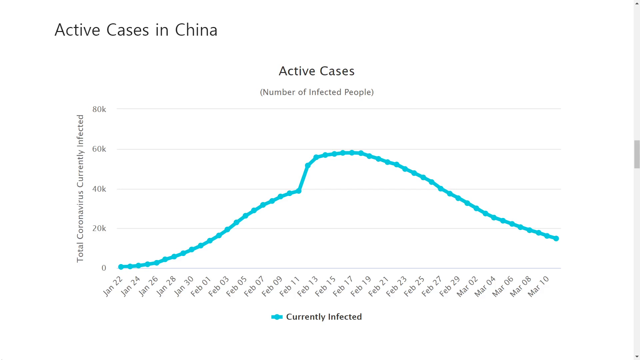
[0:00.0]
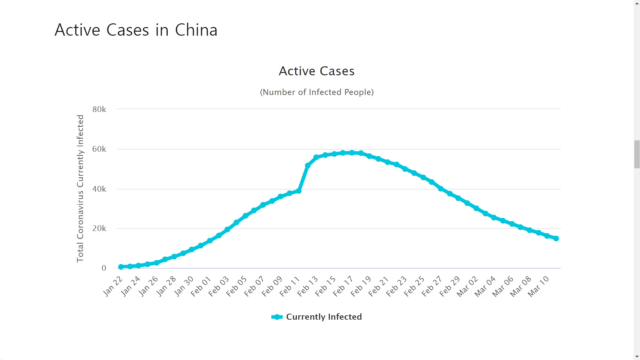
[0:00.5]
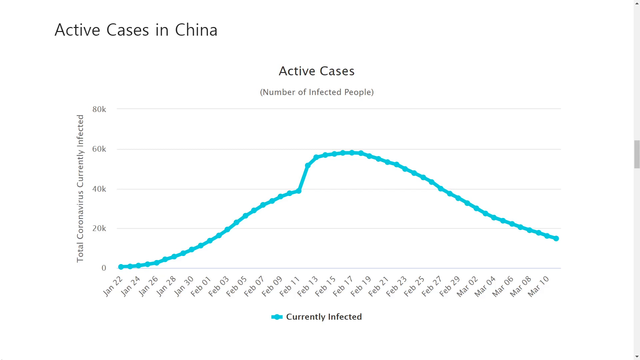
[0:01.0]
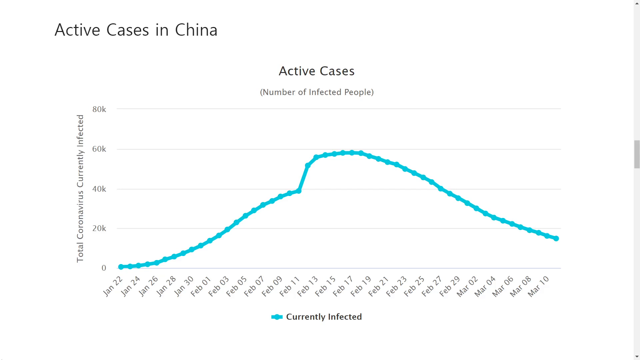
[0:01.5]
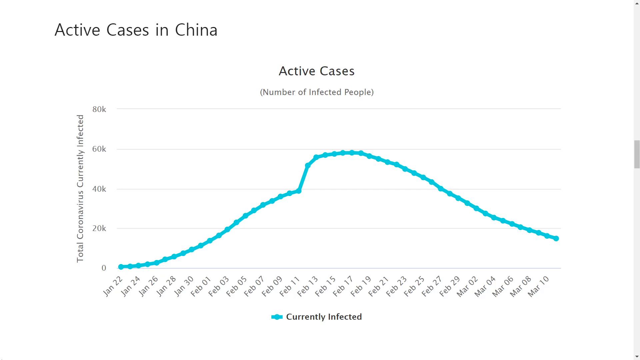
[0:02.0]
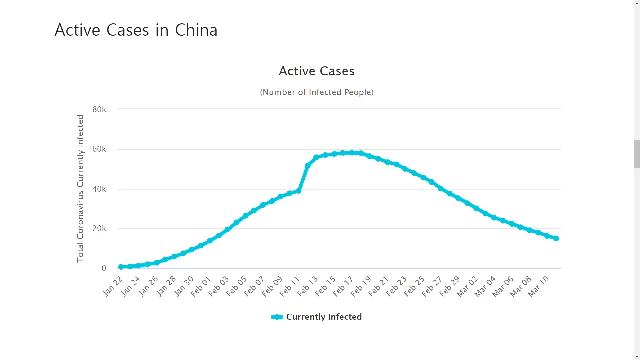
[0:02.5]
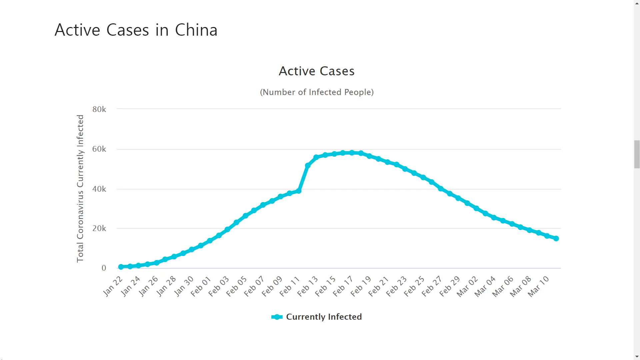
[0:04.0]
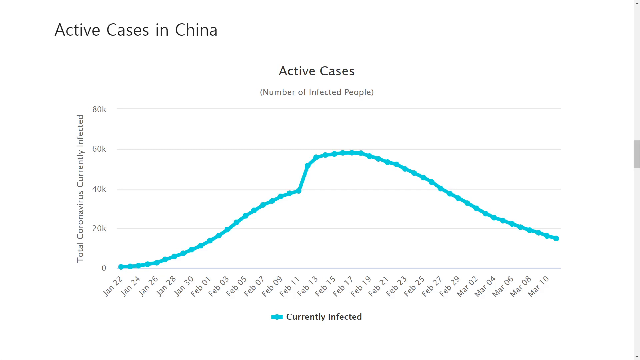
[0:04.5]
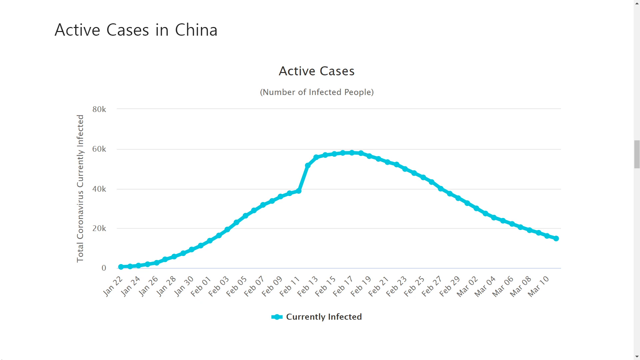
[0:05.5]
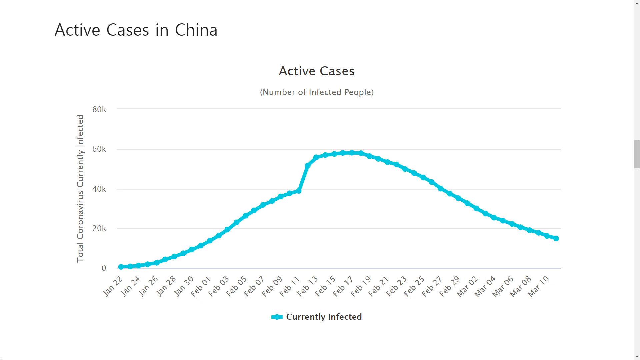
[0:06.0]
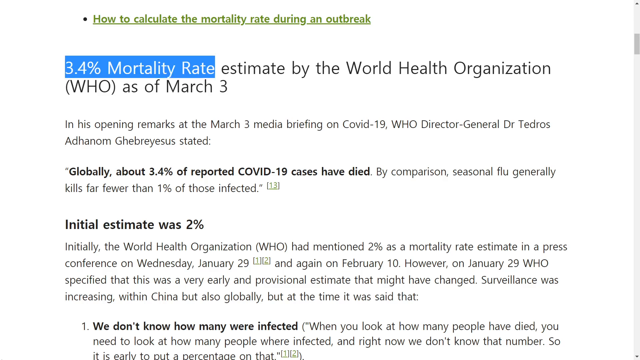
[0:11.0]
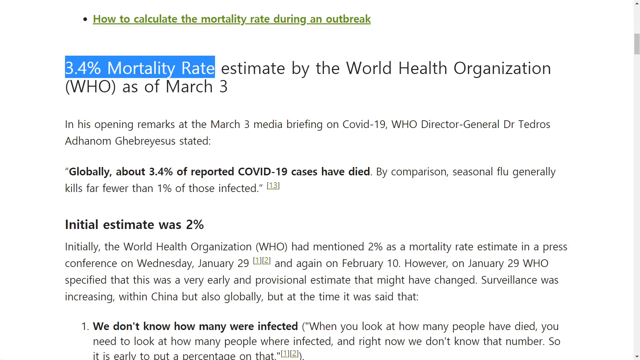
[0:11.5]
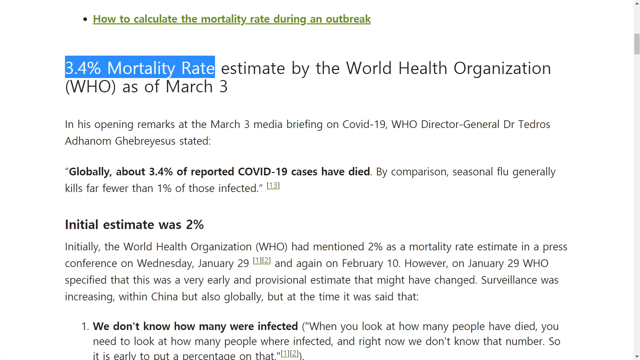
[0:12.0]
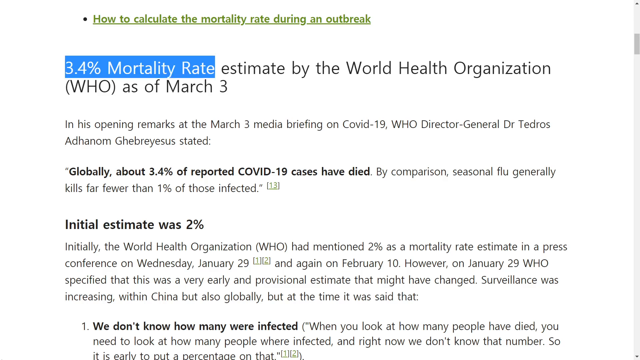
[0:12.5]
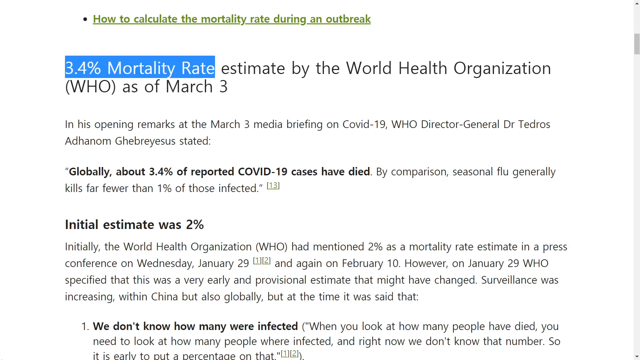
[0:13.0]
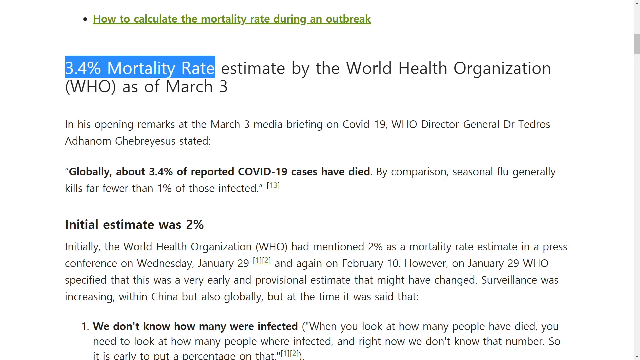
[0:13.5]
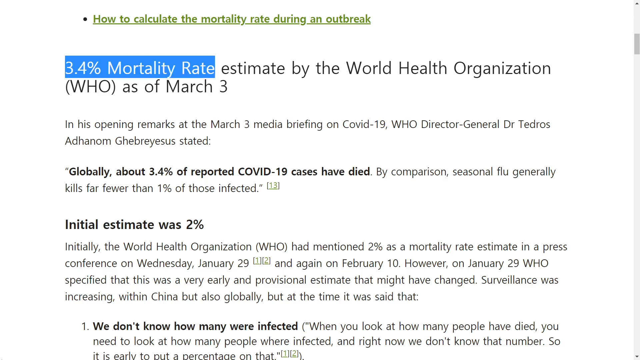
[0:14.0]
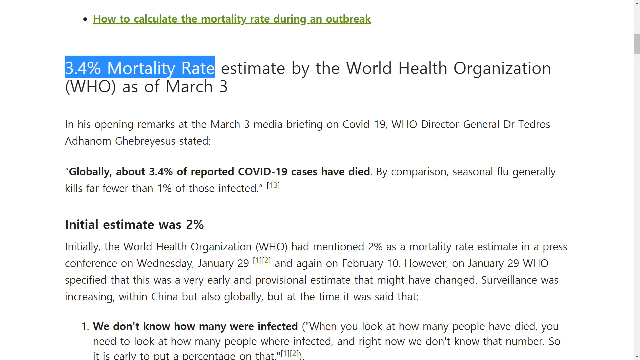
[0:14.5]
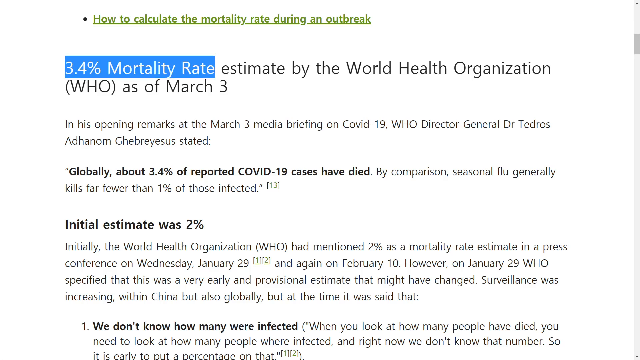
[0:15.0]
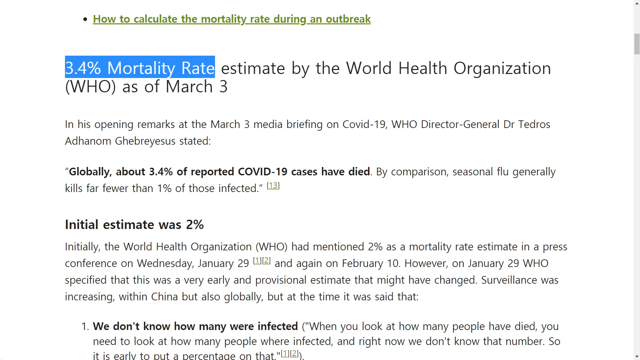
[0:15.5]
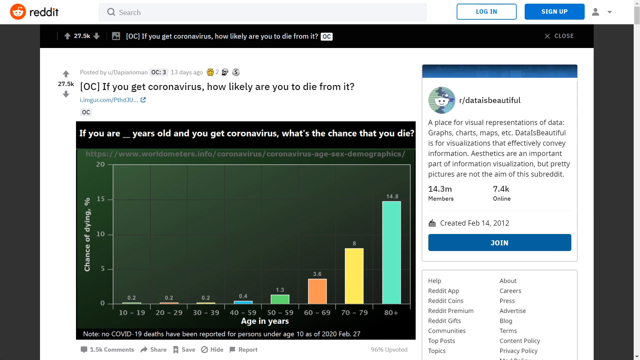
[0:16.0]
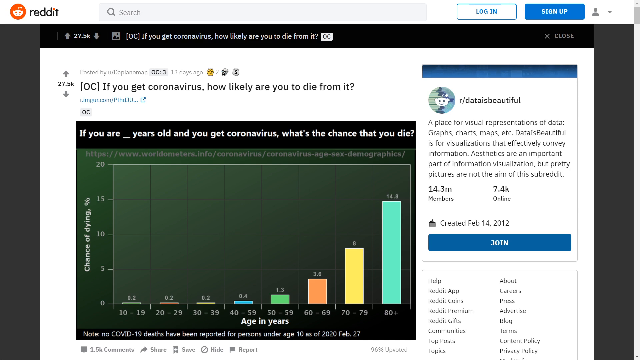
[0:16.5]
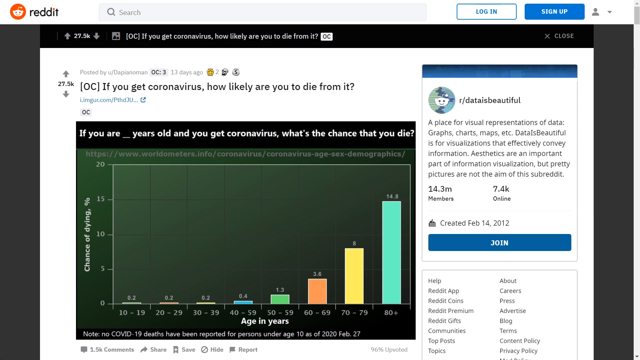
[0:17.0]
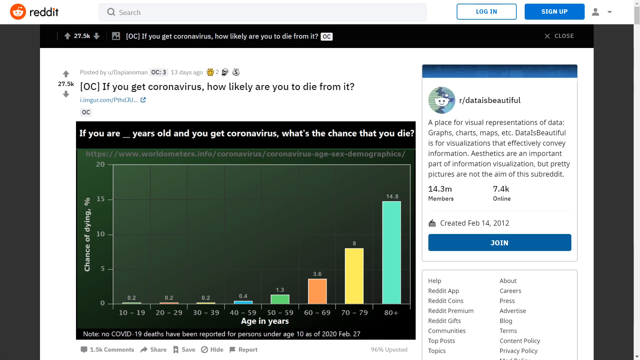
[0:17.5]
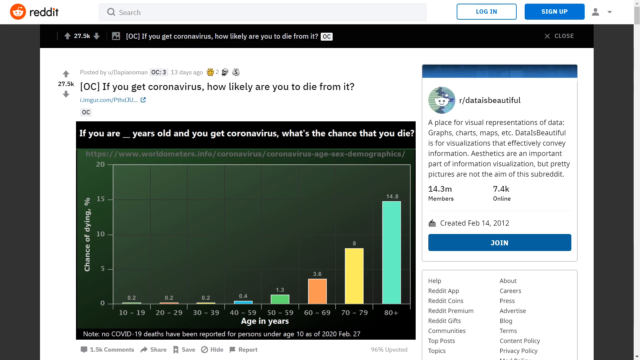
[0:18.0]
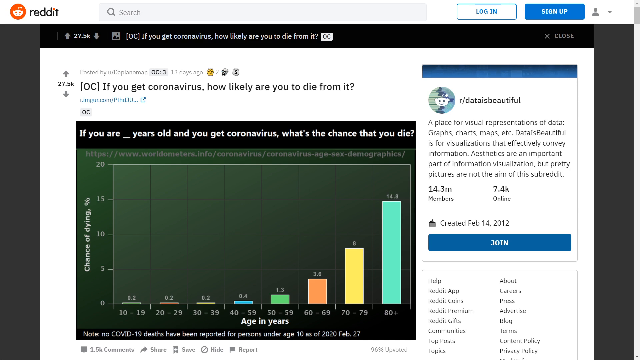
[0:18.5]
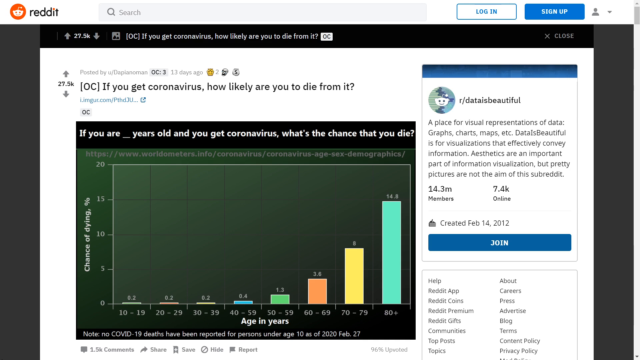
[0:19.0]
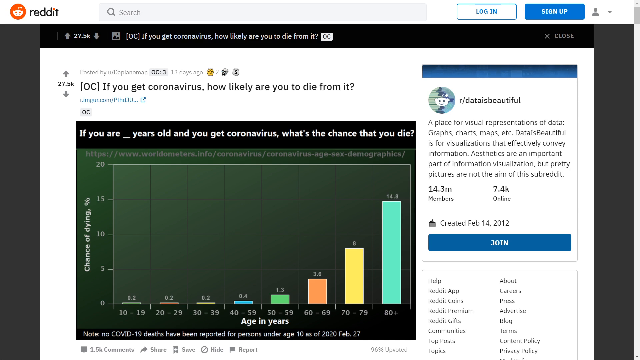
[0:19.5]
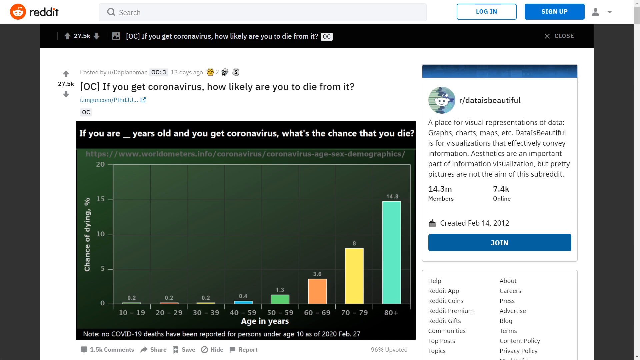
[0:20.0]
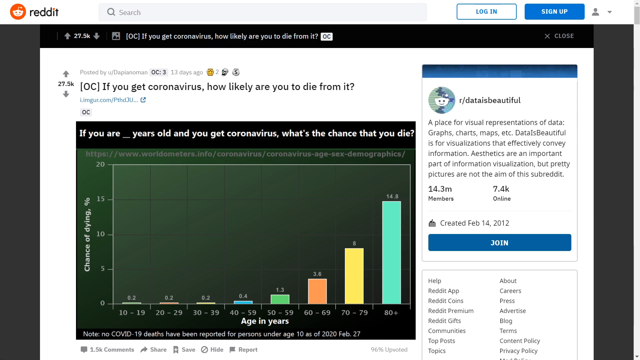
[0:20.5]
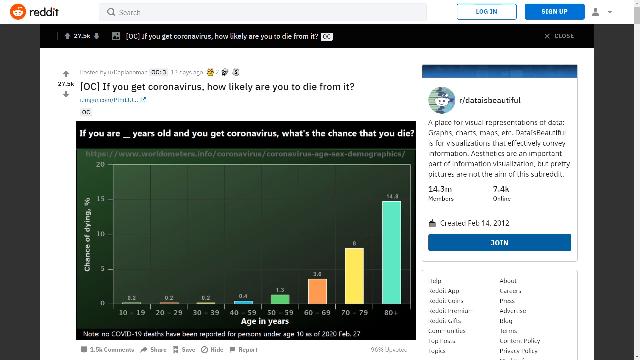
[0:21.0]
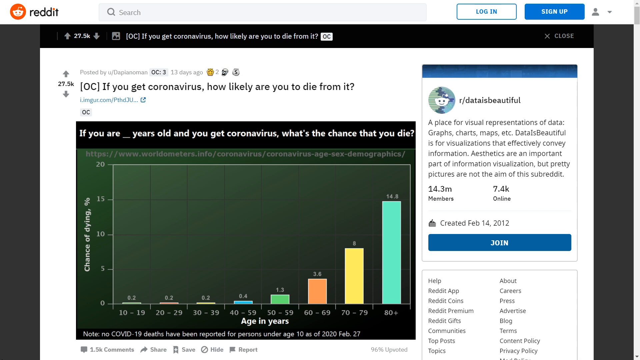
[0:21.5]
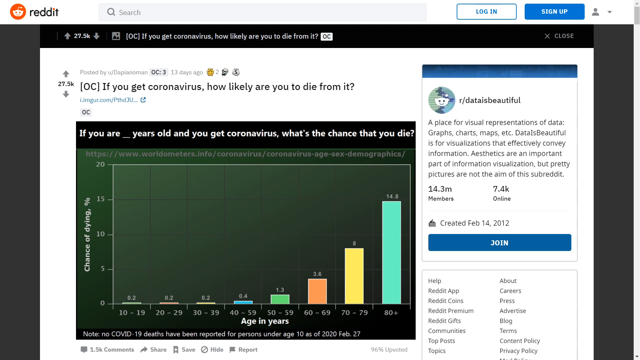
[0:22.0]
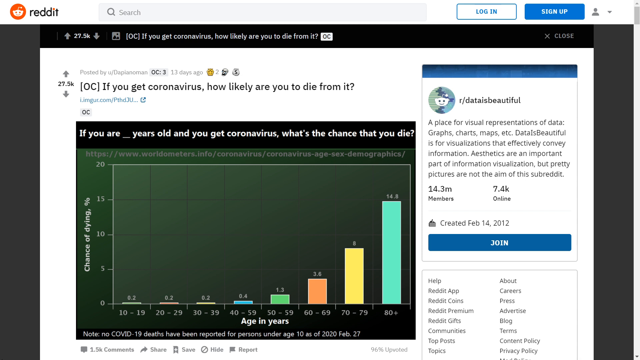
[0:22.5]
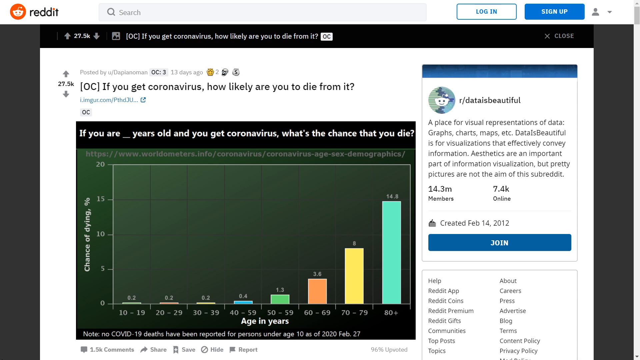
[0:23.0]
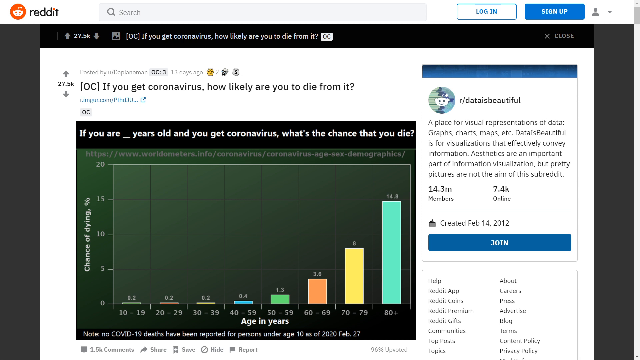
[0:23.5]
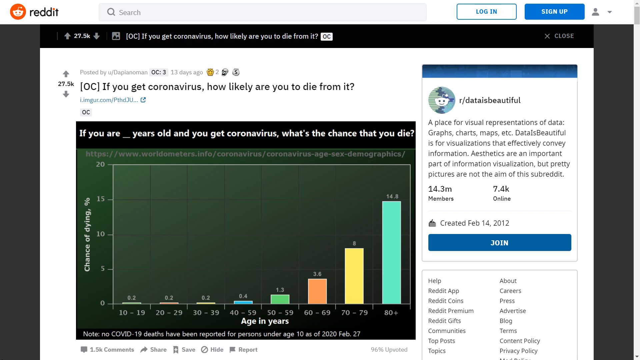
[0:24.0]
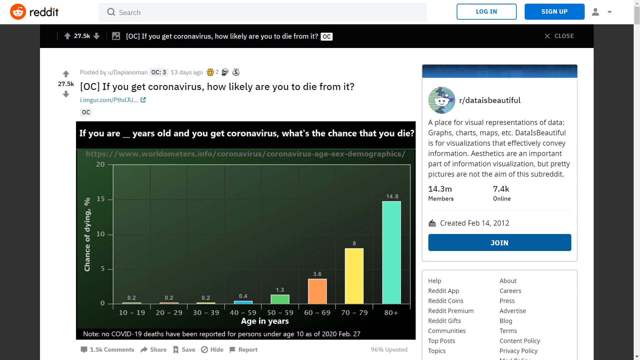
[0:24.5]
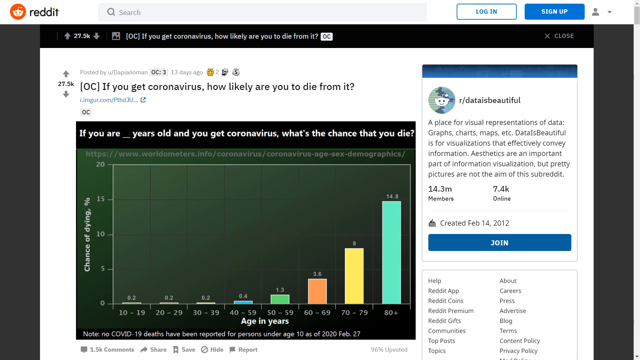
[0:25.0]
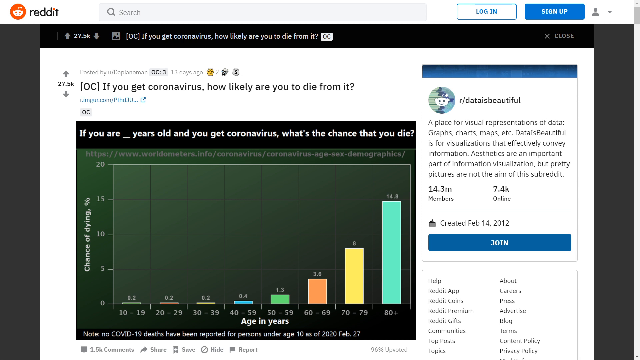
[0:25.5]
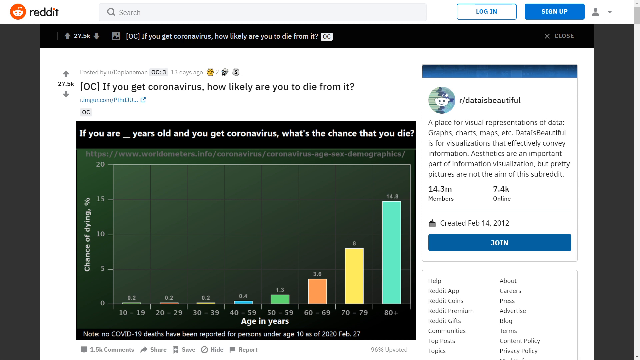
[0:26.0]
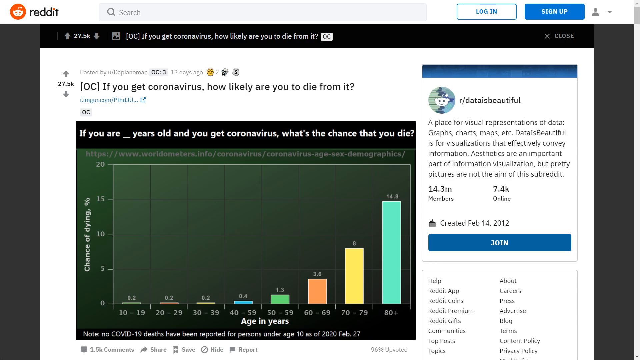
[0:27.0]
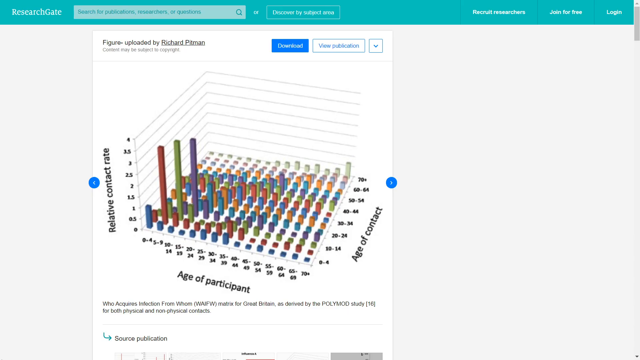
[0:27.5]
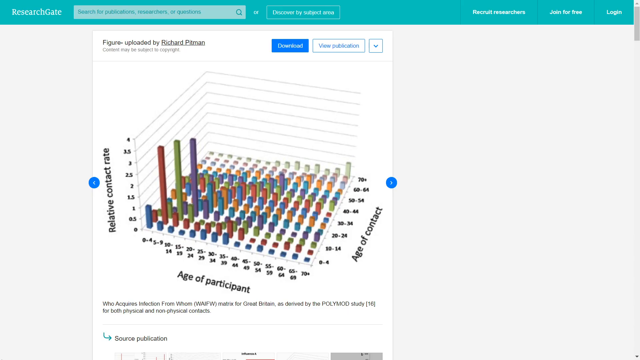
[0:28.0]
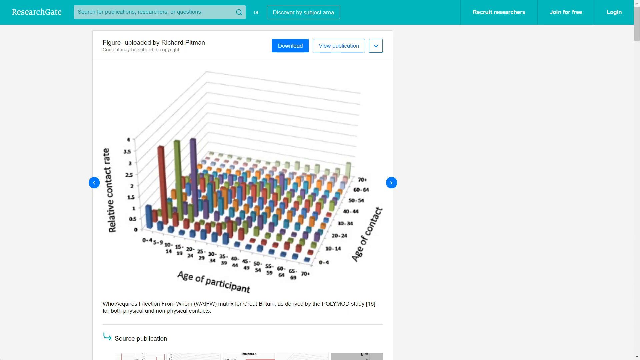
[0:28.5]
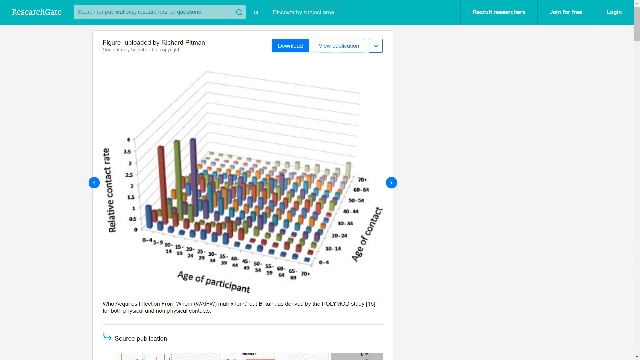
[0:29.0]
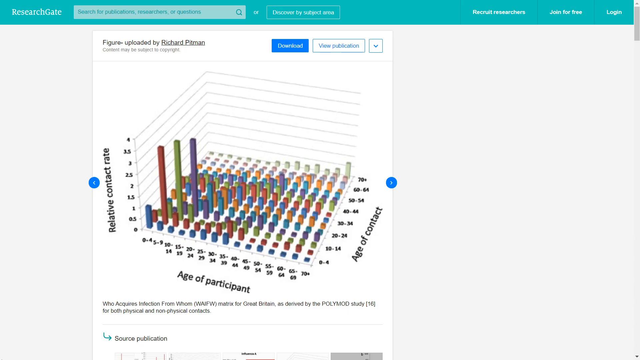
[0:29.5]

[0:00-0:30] A graph titled "active cases in China" is shown, with the background title "active cases (number of infected people)". The y-axis is labeled "total coronavirus currently infected" and the x-axis "currently infected". The curve is described as a normal S-curve that rises in the middle and goes lower at the end, spanning January 22 to March 10. The y-axis ranges from 0 to 80K, and the maximum is 60K. The next screen is headed "how to calculate the mortality rate during an outbreak" and shows text including "3.4% mortality rate, estimated by the World Health Organization, WHO, as of March 3", a statement that in his opening remarks at the March 3 media briefing on COVID-19, WHO Director General Dr. Tedros Adhanom Ghebreyesus stated "Globally, about 3.4% of reported COVID-19 cases have died", that by comparison "seasonal flu generally kills far fewer than 1% of those infected", and "Initial estimate was 2%", noting that the World Health Organization had initially mentioned 2% as a mortality rate estimate in a press conference on Wednesday, January 29, and again on February 10, and that WHO specified this was a very early and provisional estimate.